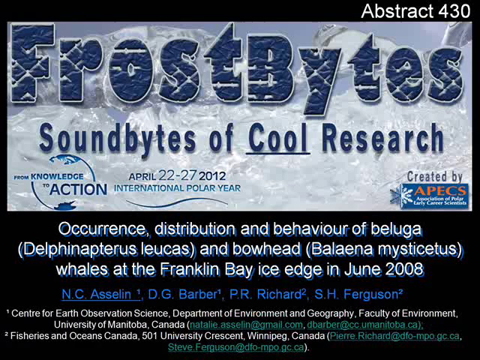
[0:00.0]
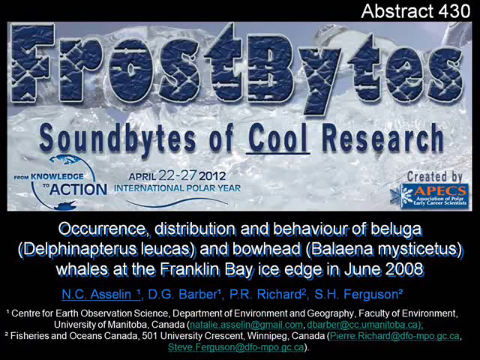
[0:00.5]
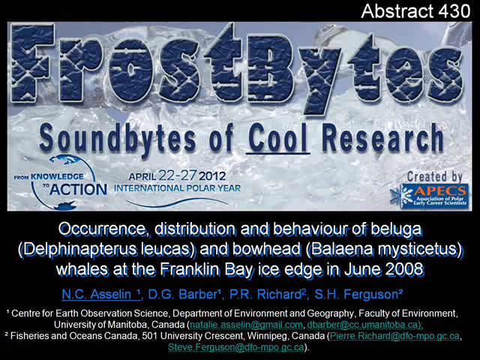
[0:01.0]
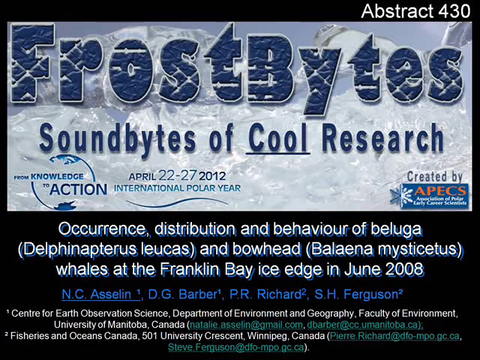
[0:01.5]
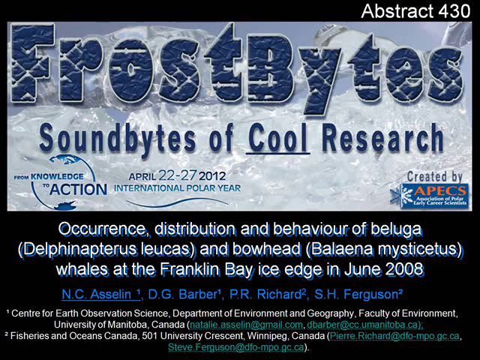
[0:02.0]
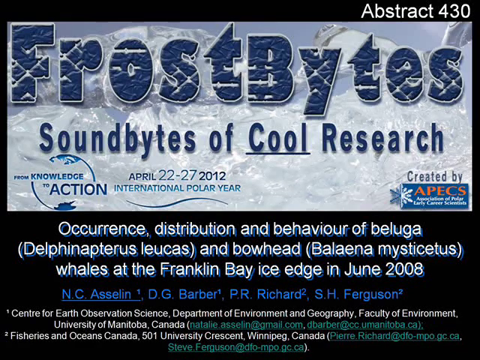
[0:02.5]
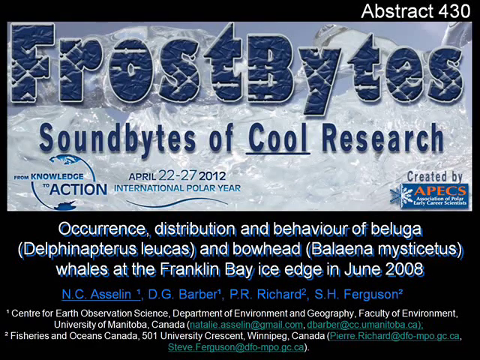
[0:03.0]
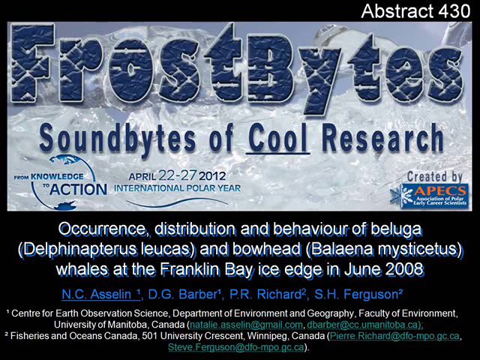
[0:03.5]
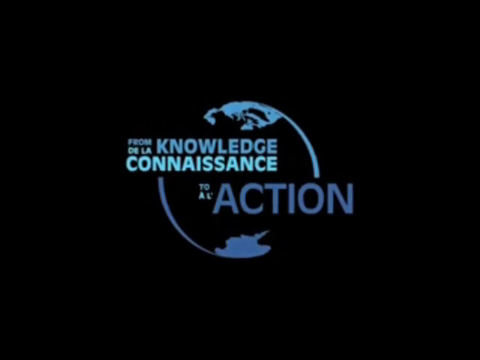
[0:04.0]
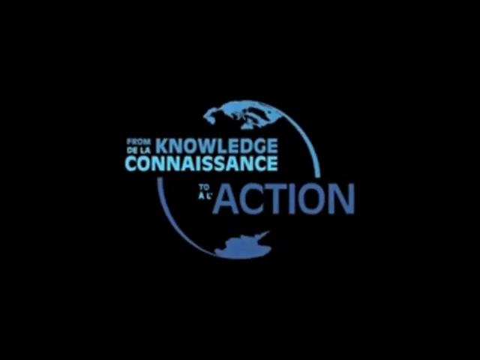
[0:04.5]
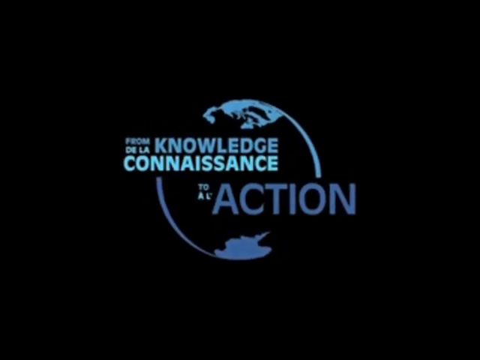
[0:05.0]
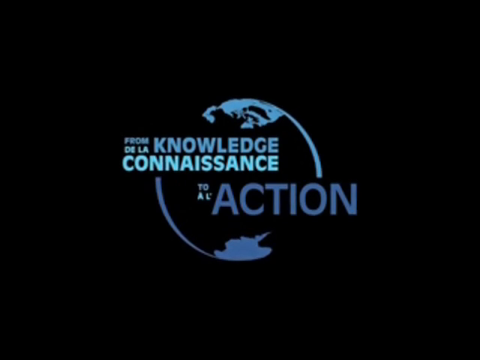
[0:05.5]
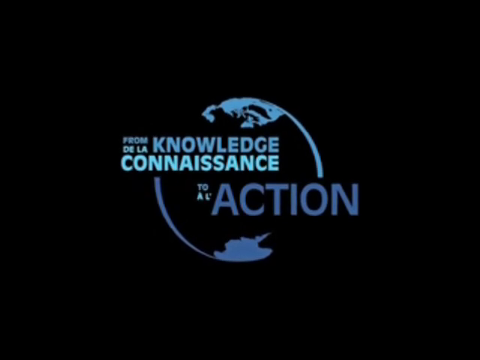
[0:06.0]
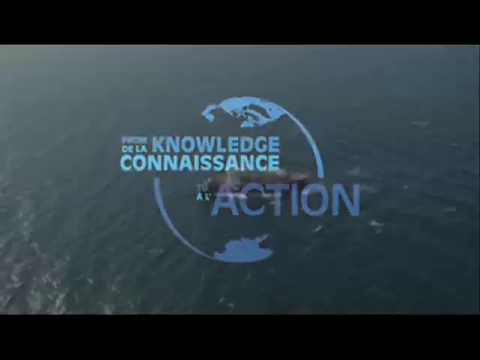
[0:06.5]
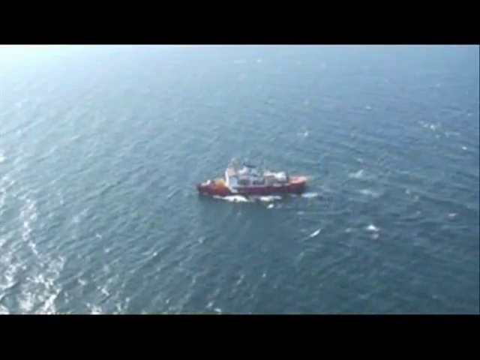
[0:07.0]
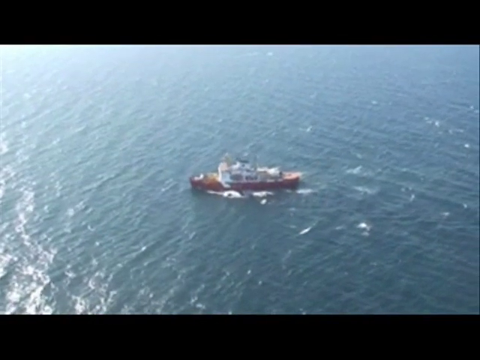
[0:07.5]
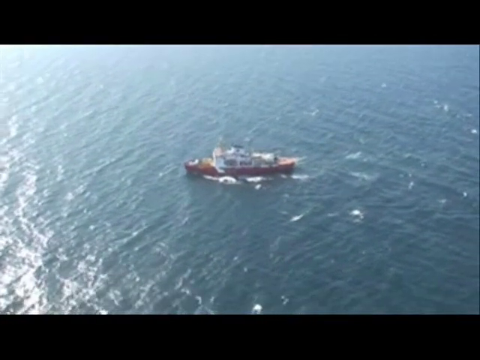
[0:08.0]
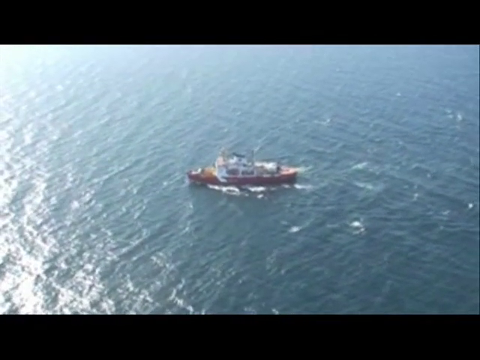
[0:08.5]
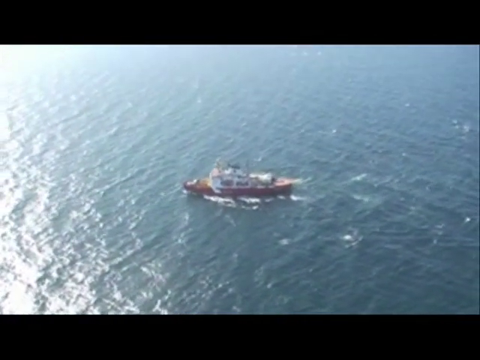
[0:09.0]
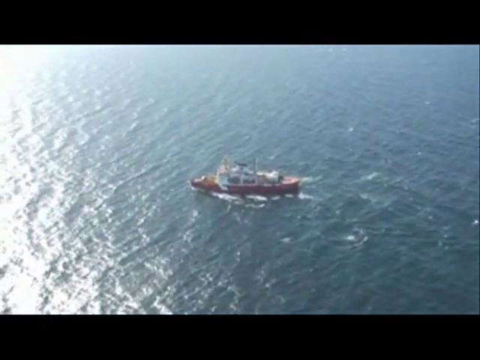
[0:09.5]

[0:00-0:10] The video opens on a paper with "abstract 430" in the upper right-hand corner. It reads "frostbites soundbites of cool research," gives the dates "April 22nd to the 27th 2012," and says "international polar year" and "occurrence distribution and behavior of beluga and bowhead whales at the Franklin Bay ice edge in June 2008." A globe then pops up with text ending "knowledge in Action." Next, a ship is out in the ocean, moving through some waves.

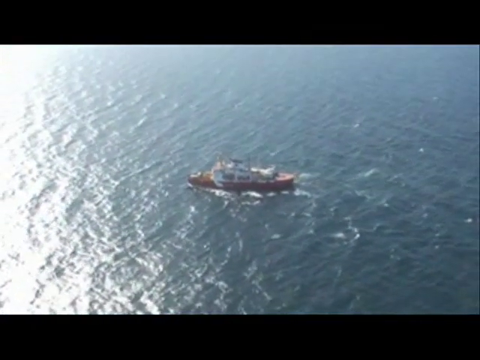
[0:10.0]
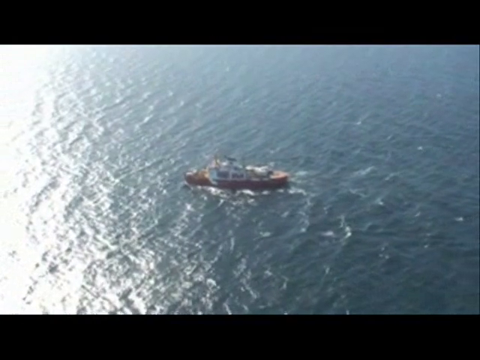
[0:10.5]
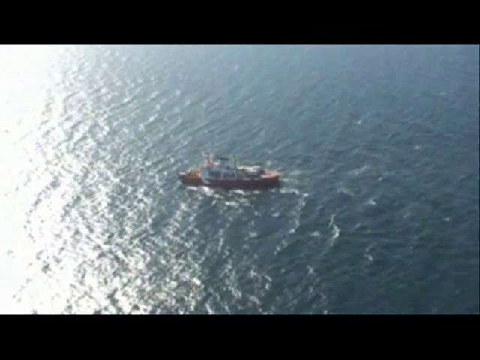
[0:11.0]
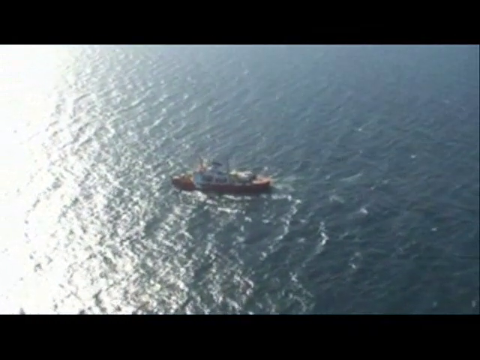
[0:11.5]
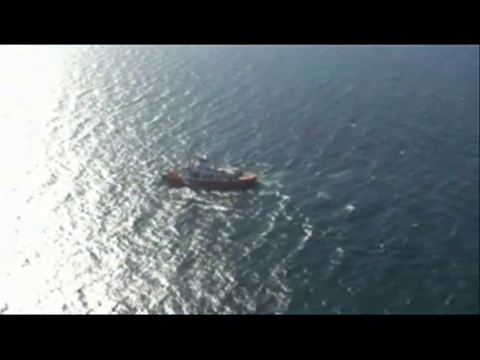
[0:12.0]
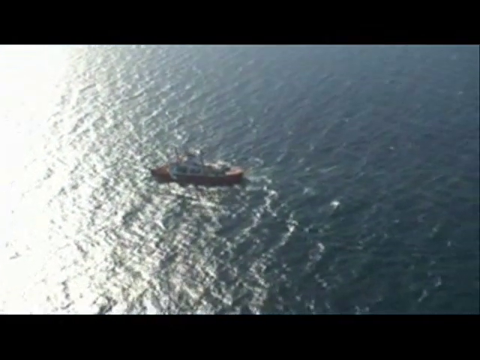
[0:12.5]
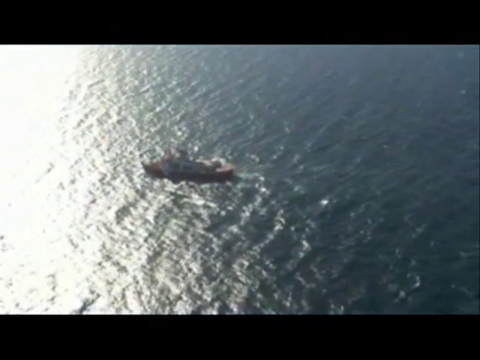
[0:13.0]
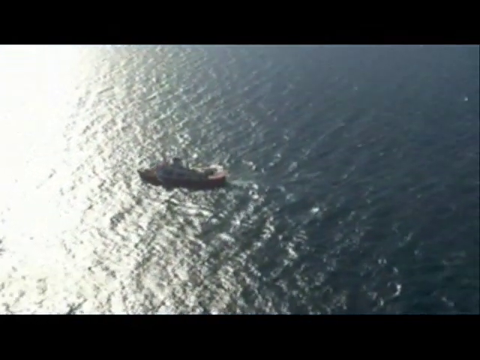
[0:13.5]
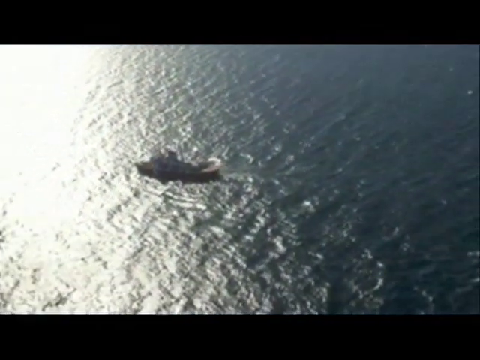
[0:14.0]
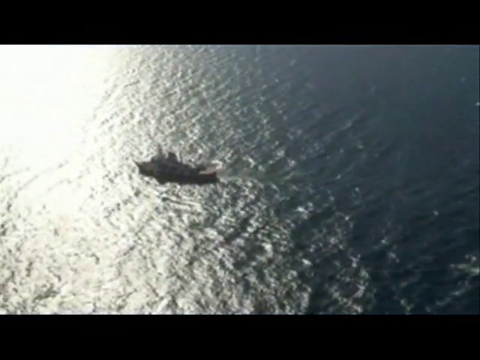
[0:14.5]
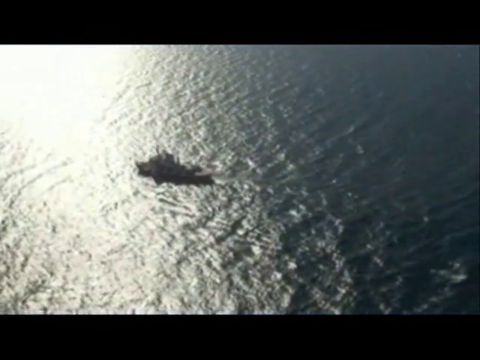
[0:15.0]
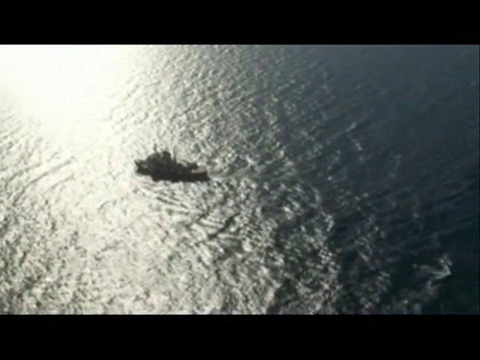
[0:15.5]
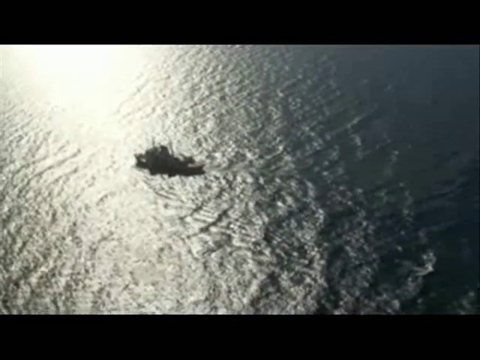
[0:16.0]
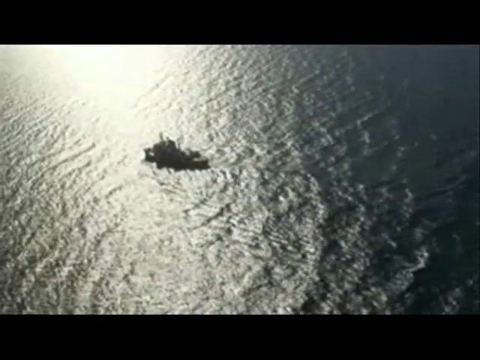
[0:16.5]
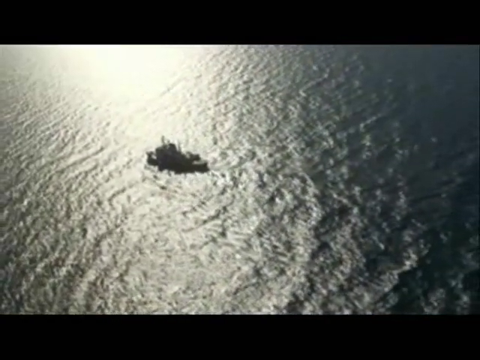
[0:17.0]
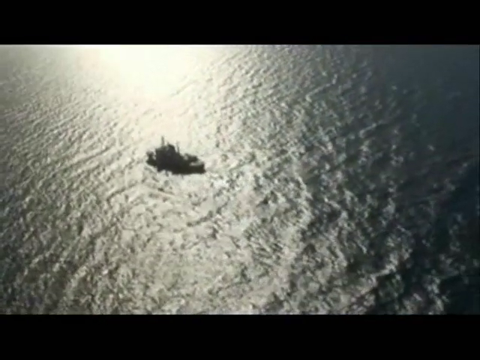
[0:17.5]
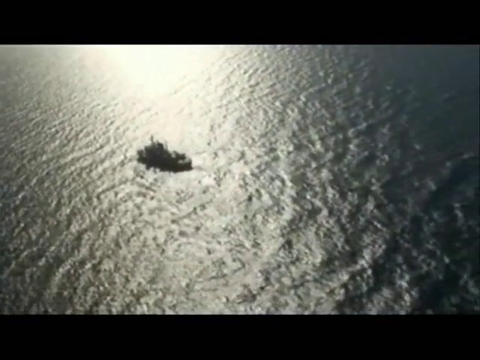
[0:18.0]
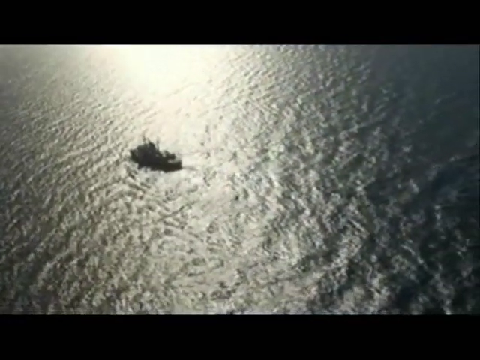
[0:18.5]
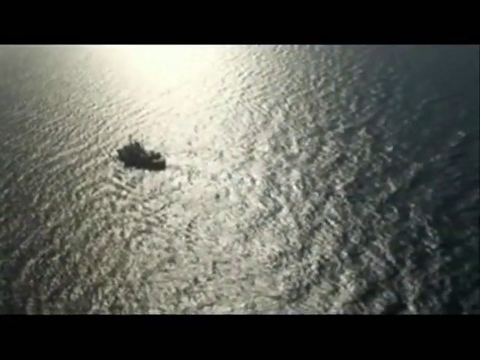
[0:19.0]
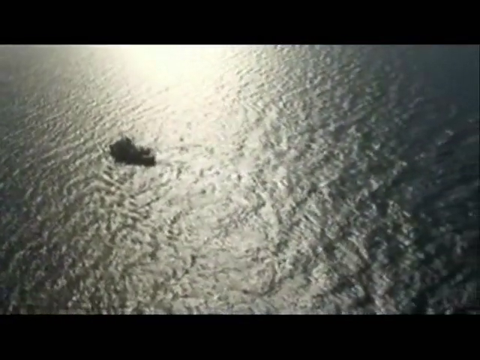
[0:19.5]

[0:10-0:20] Black rectangles run along the top and bottom of the frame, and the whole middle section shows a boat out in the water. The sun seems to reflect off the water, which looks very shiny in the upper left portion of the frame, and the ship is heading off toward the upper left-hand corner of the picture. The ship creates white waves on its left and right sides as it moves. For just a moment, some ice and water are visible in the background.